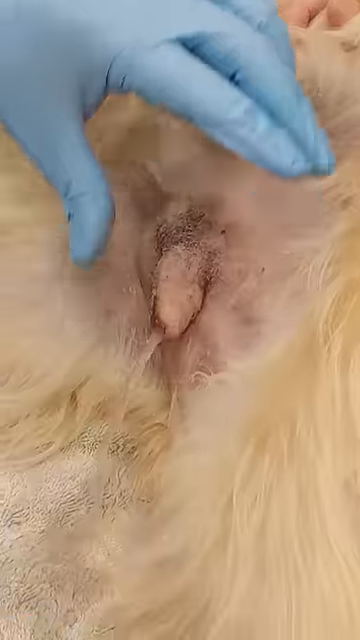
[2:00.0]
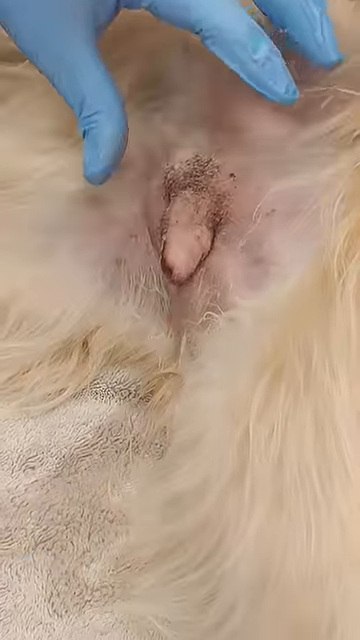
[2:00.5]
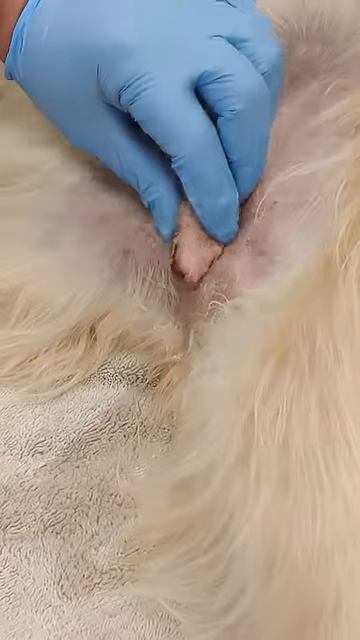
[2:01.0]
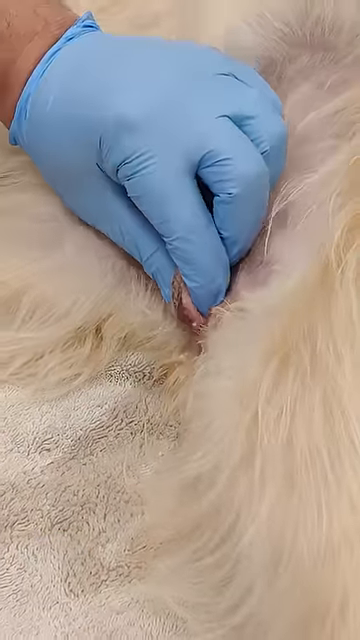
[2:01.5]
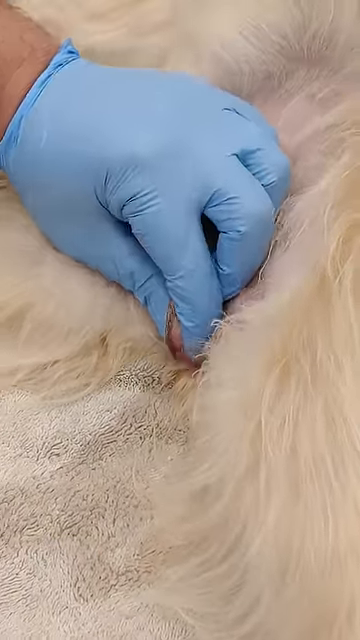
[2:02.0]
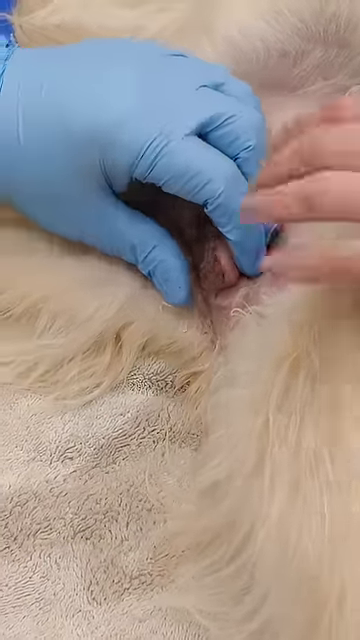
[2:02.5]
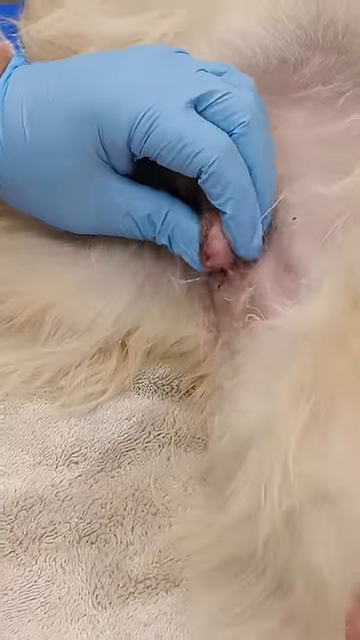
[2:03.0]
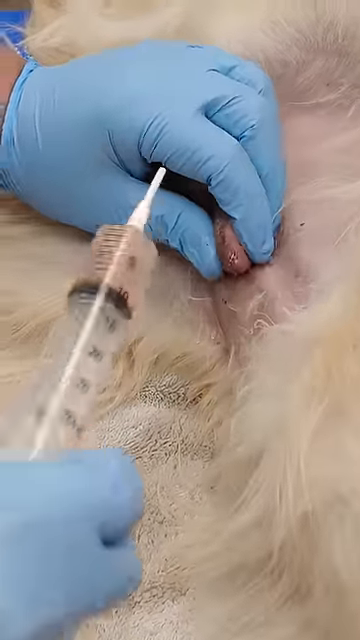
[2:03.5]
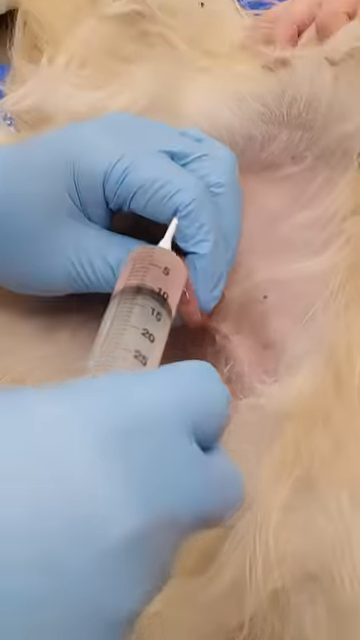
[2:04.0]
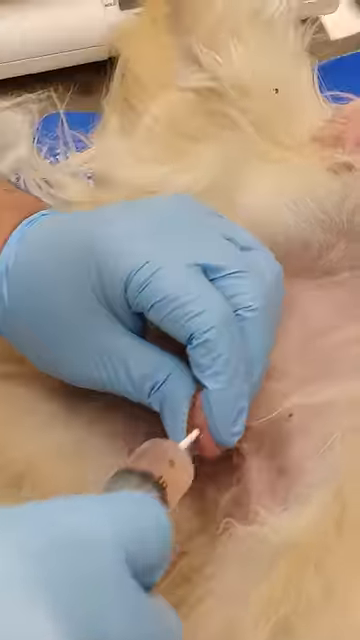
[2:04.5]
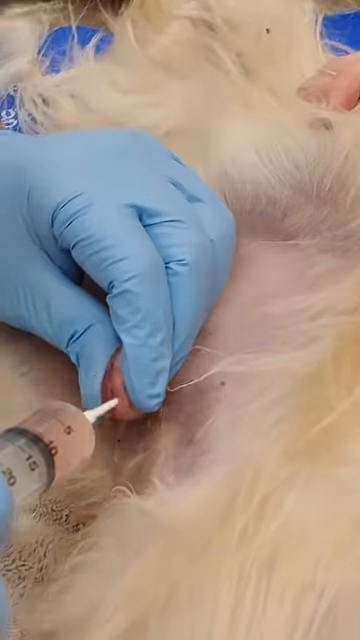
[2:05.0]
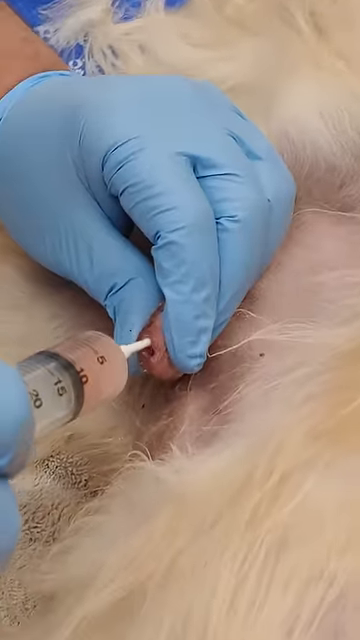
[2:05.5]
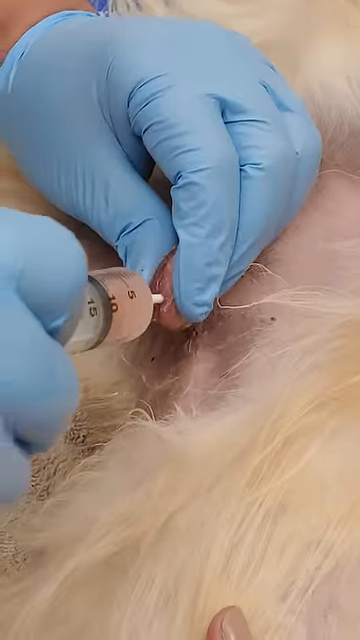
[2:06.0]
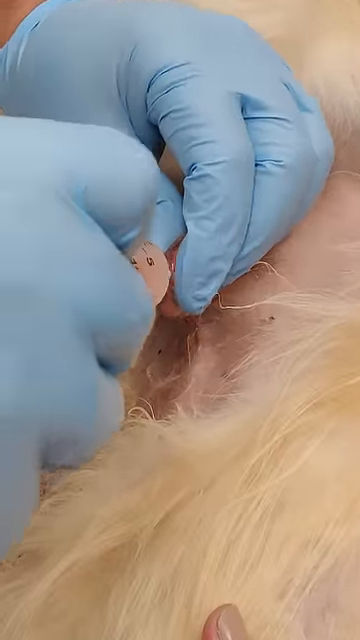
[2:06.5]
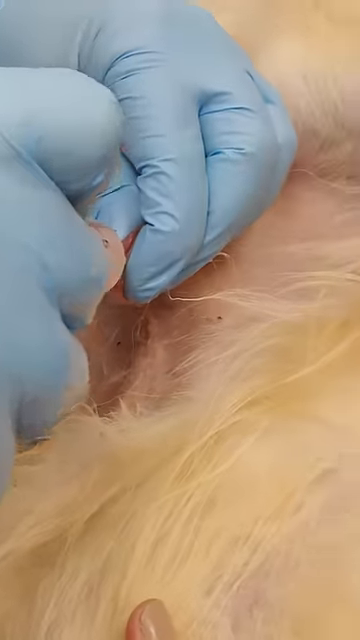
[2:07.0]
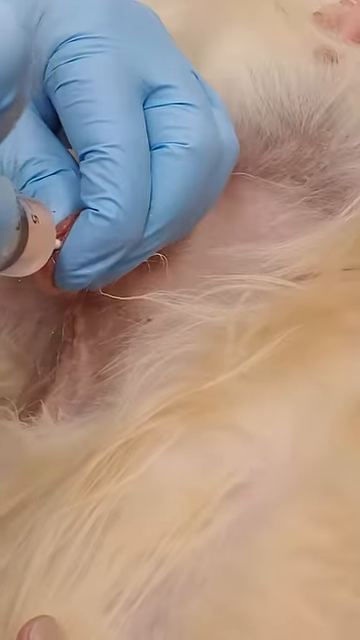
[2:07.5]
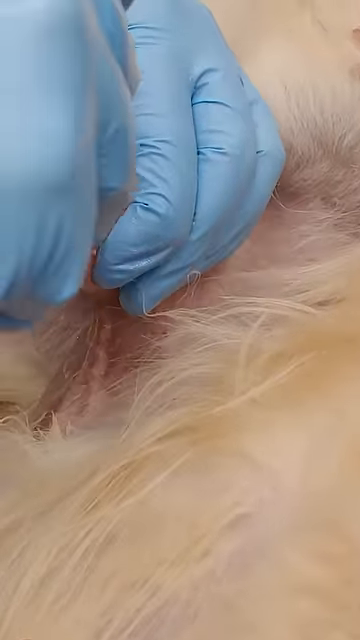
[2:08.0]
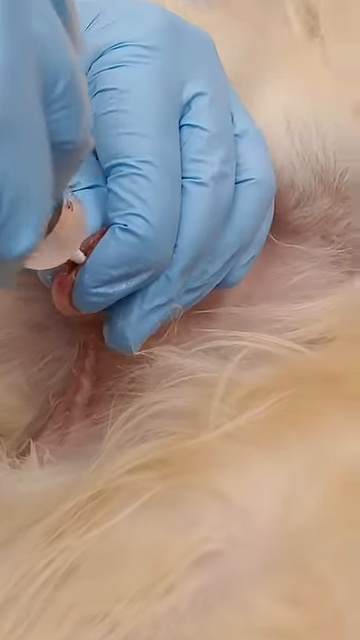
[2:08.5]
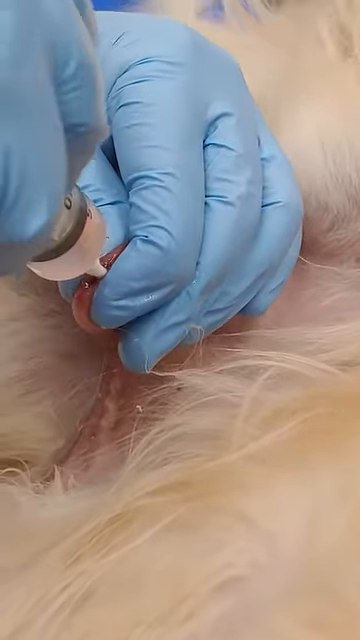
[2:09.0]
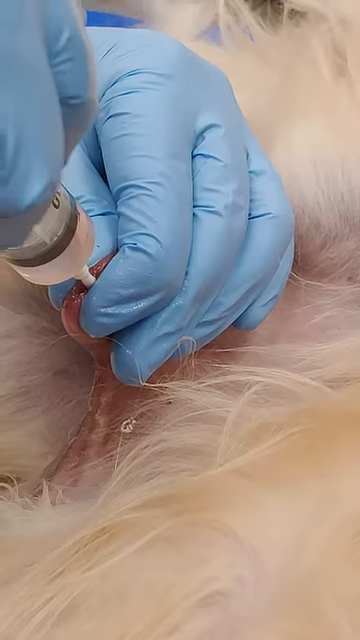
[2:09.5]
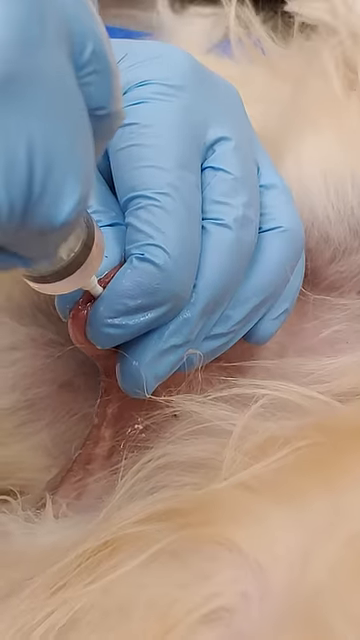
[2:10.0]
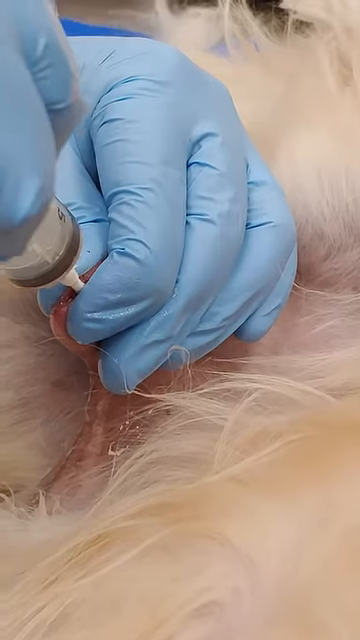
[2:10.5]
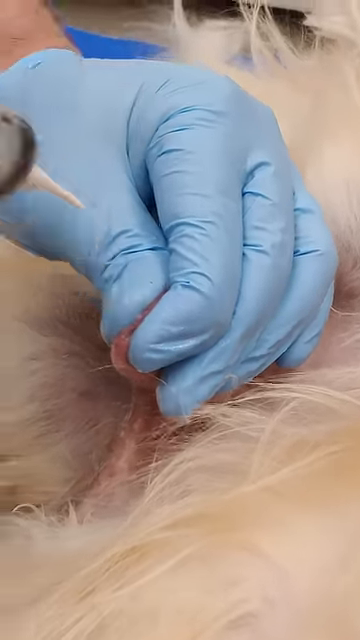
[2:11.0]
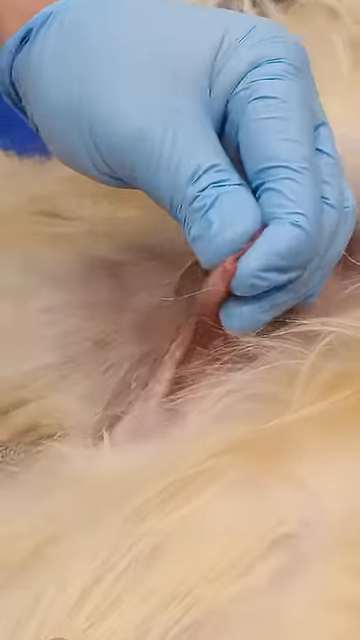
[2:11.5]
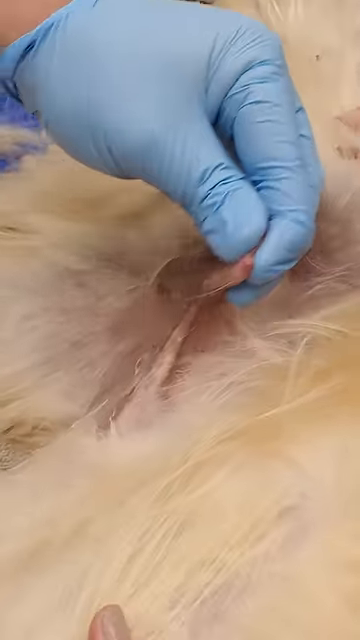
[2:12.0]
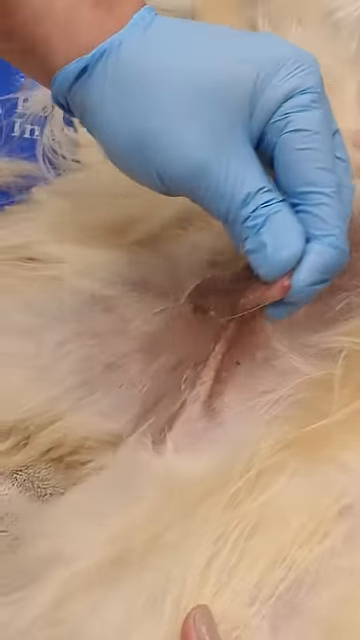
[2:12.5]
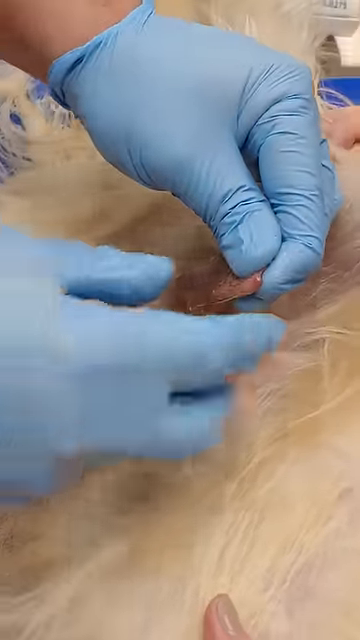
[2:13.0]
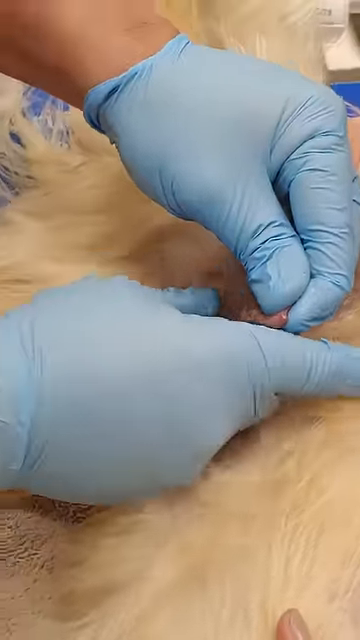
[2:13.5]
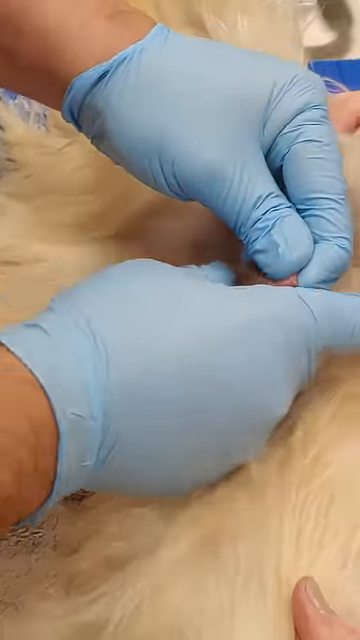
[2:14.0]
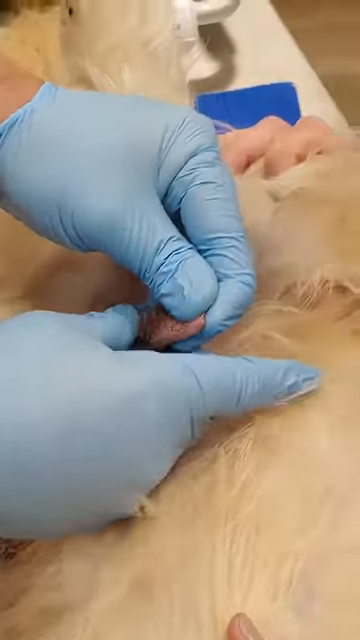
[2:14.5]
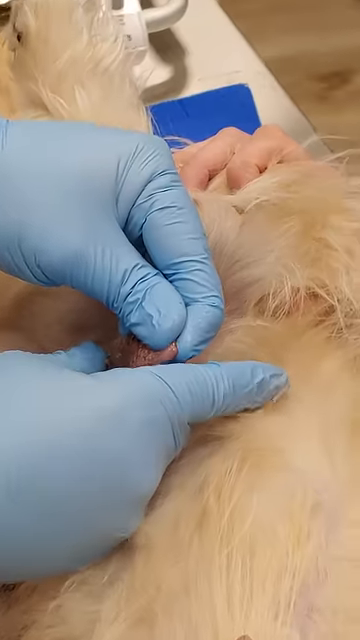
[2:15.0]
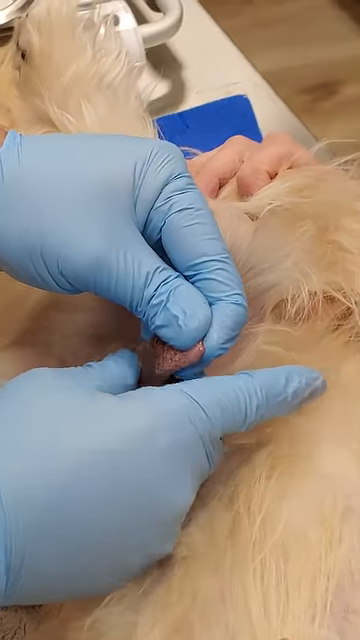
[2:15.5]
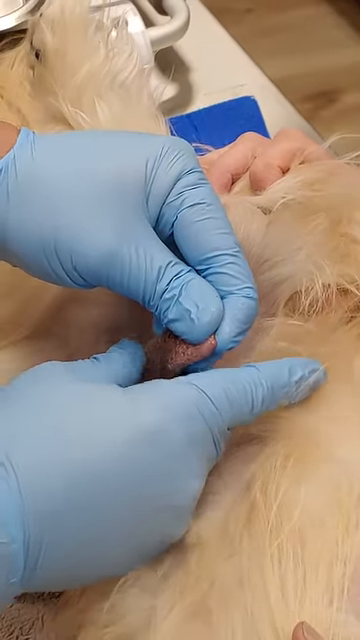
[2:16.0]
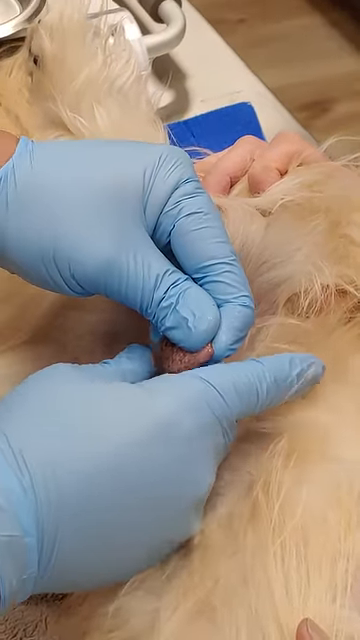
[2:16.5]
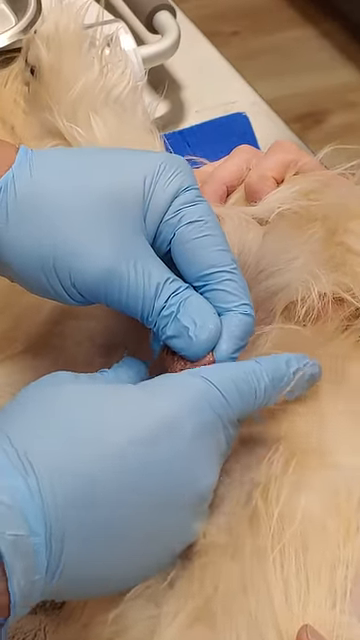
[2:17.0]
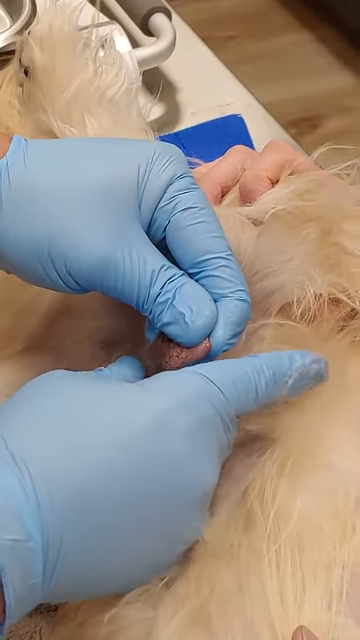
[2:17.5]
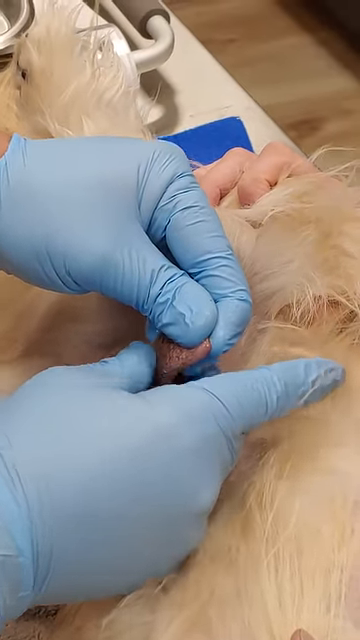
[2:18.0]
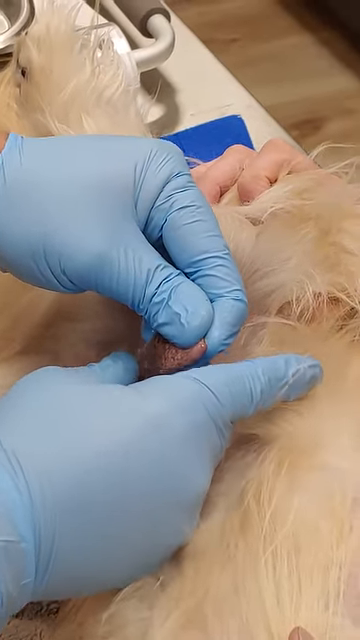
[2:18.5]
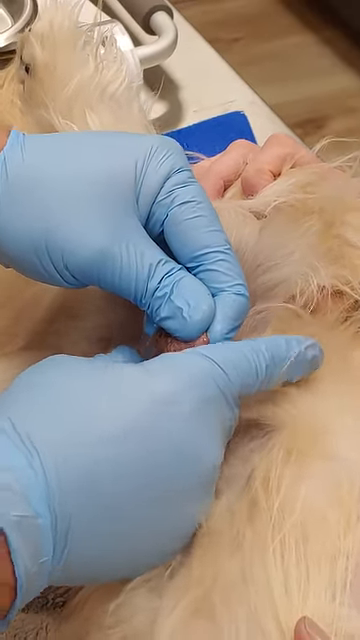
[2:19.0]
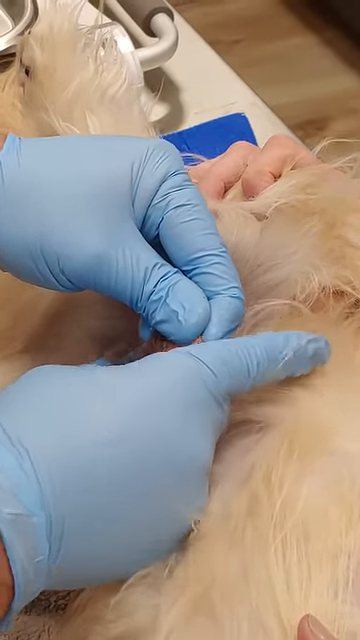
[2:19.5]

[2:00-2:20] The vet puts liquid into the dog's penis, and the liquid then comes back out, rinsing the penile area. He continues to squirt liquid into the penis, the penis is rubbed downward, and the liquid squirts back out, probably cleansing the area. The dog's fur is a beige-ish white color and has been shaved in the area of the procedure; a razor is in the background. The veterinarian wears blue gloves.